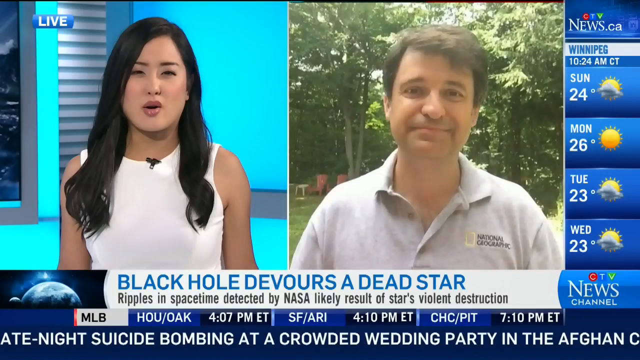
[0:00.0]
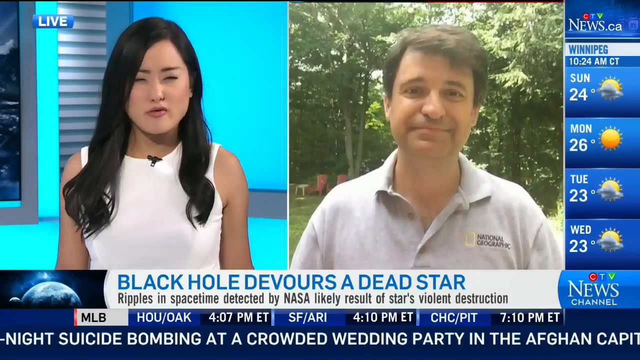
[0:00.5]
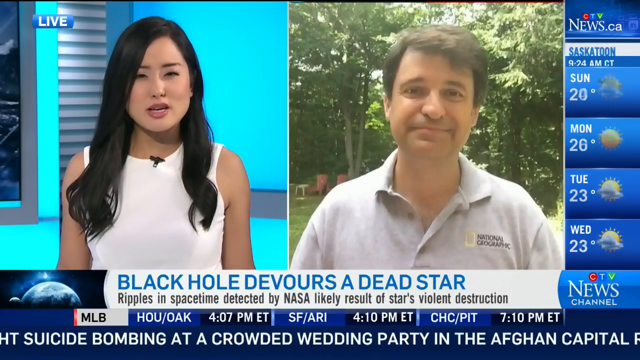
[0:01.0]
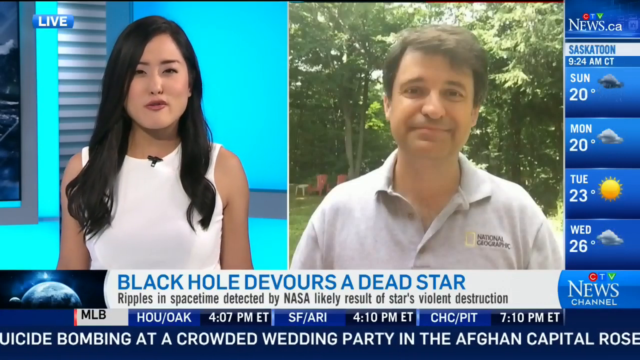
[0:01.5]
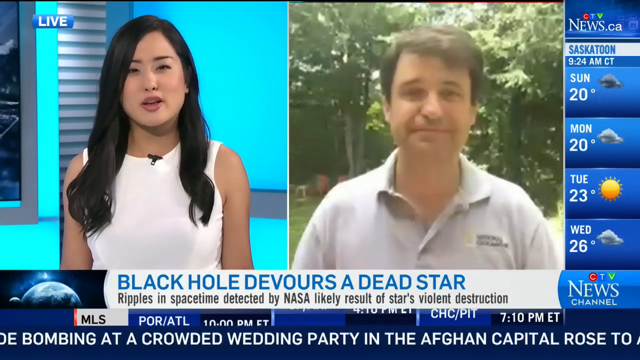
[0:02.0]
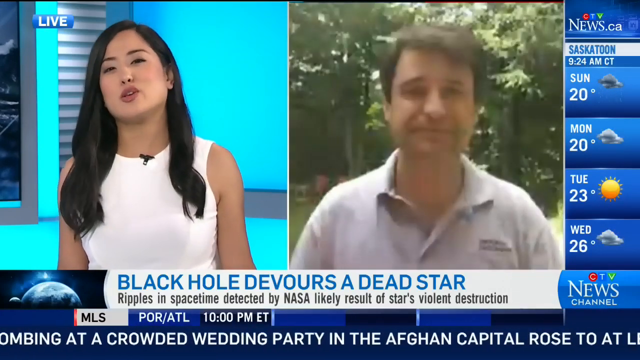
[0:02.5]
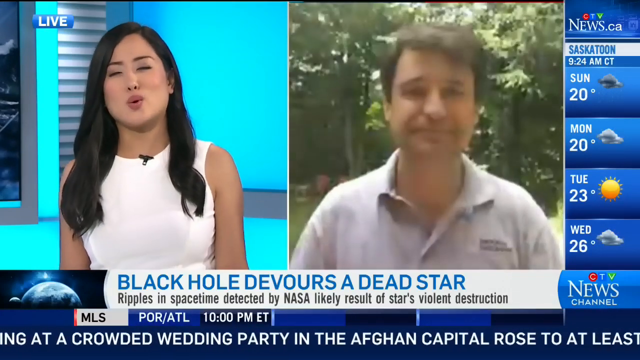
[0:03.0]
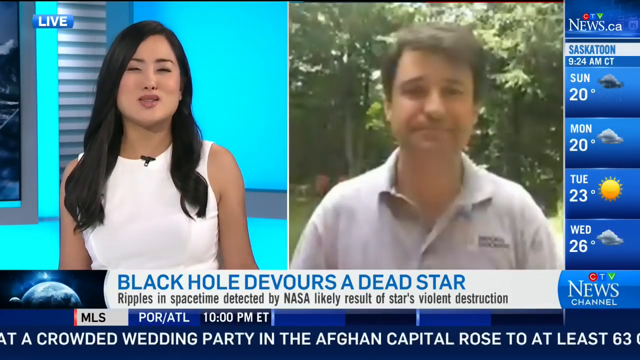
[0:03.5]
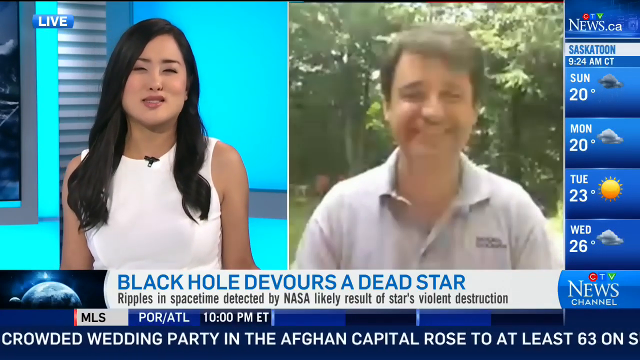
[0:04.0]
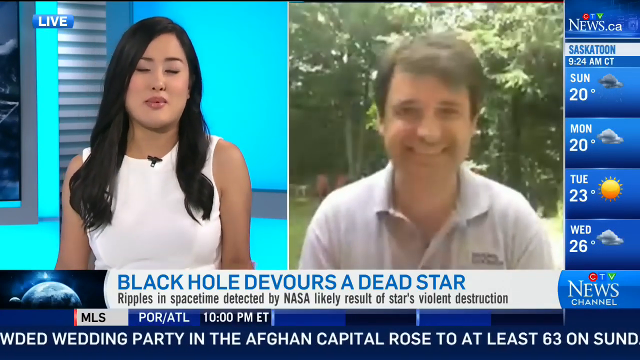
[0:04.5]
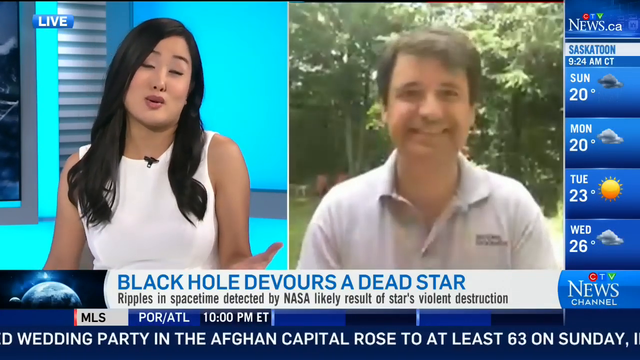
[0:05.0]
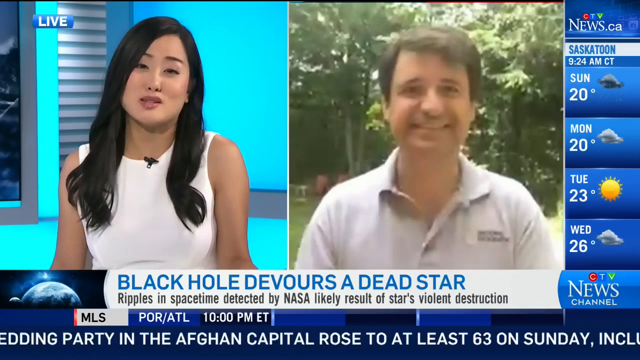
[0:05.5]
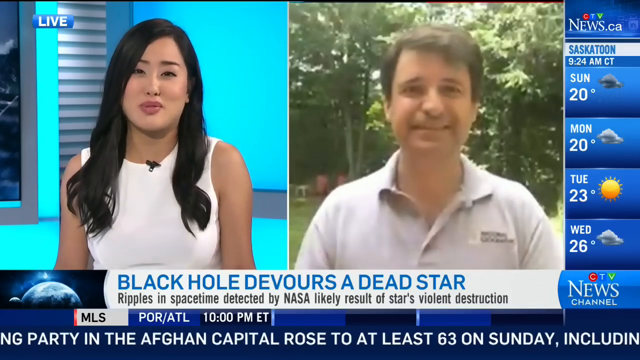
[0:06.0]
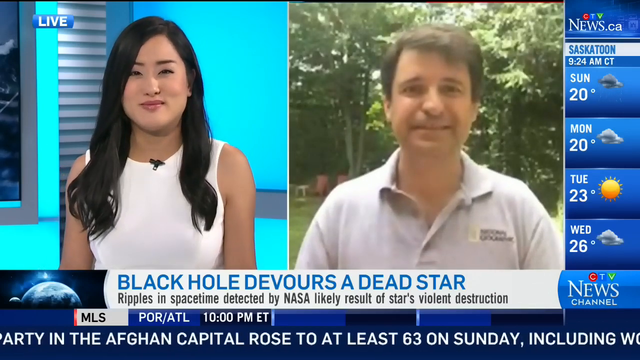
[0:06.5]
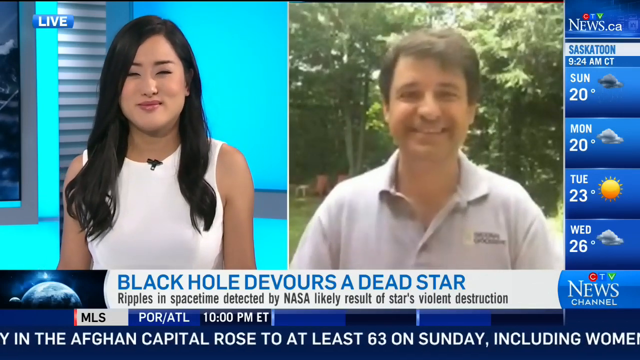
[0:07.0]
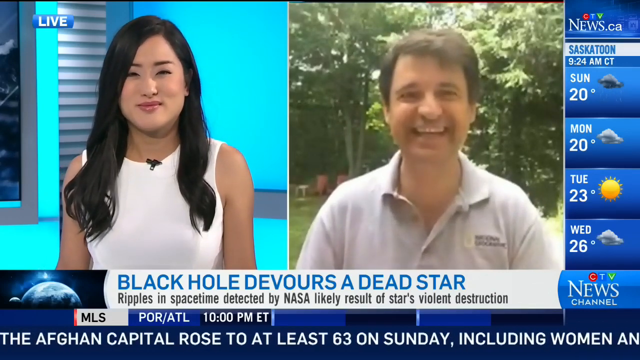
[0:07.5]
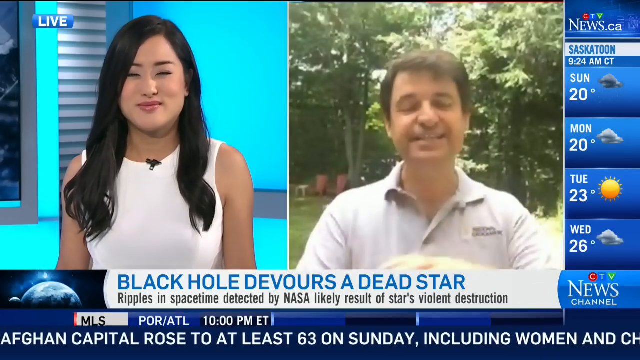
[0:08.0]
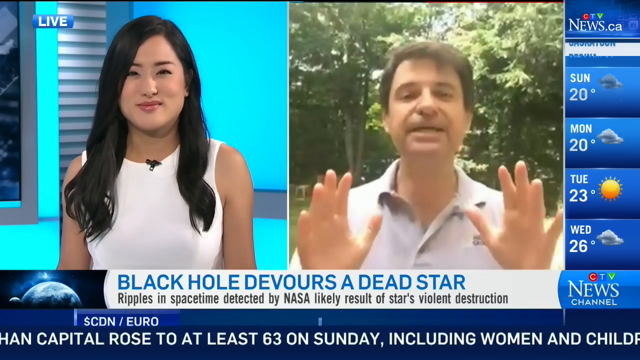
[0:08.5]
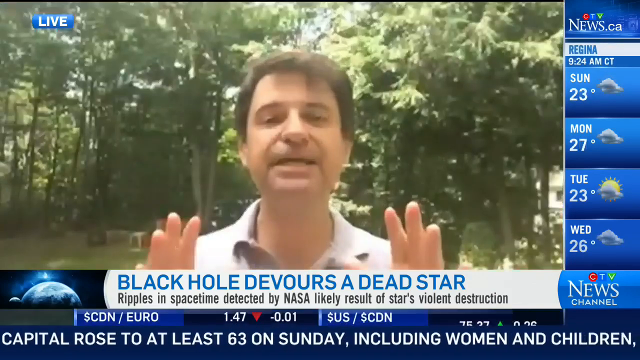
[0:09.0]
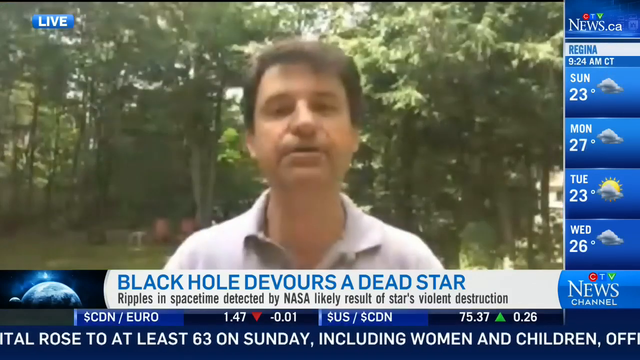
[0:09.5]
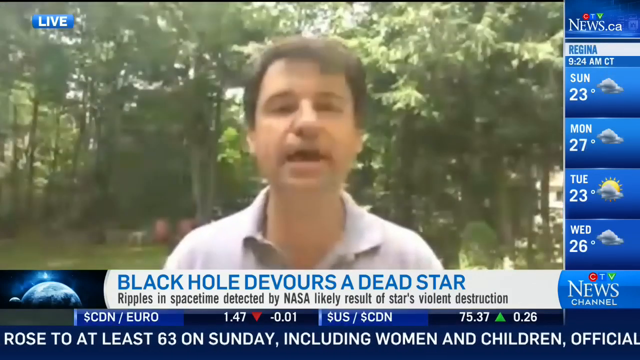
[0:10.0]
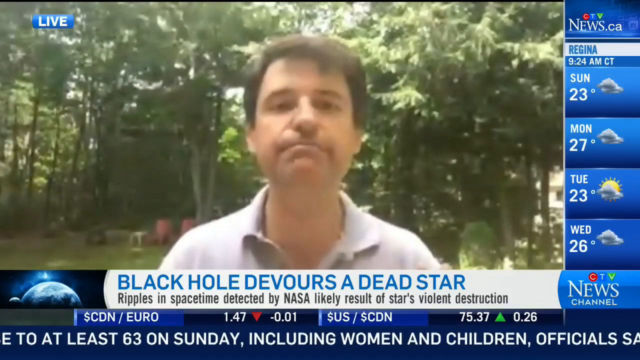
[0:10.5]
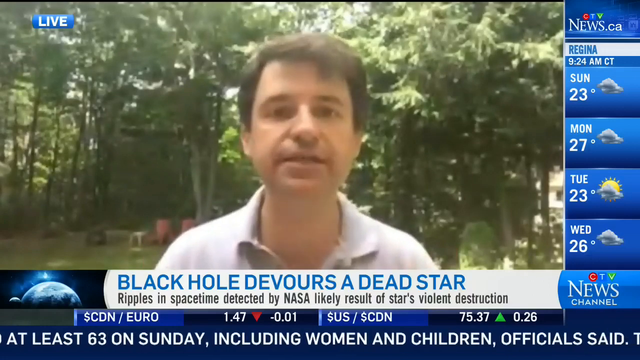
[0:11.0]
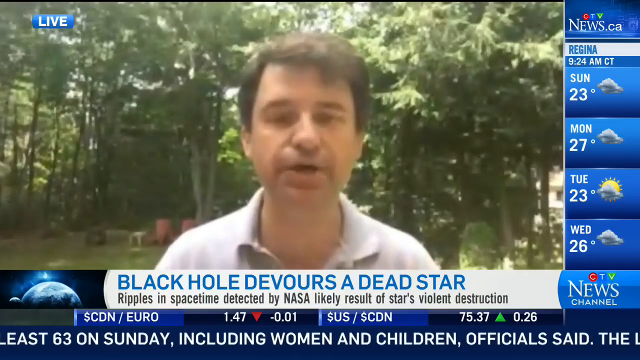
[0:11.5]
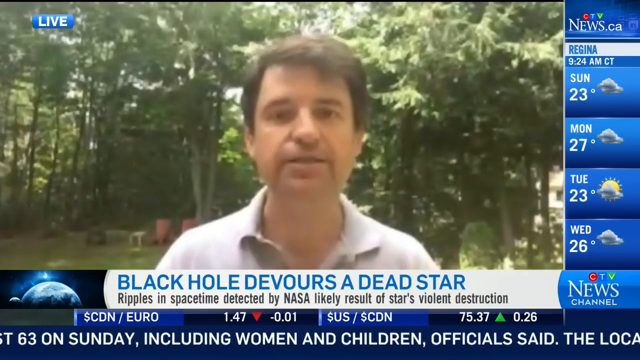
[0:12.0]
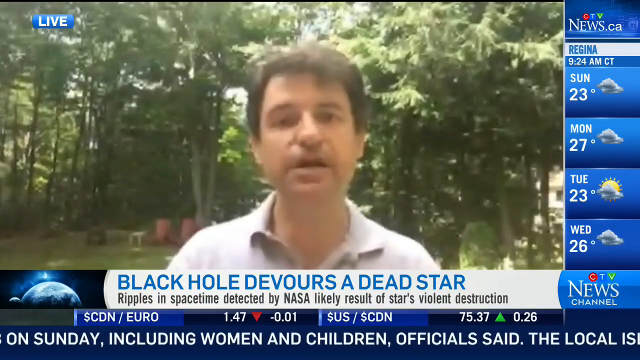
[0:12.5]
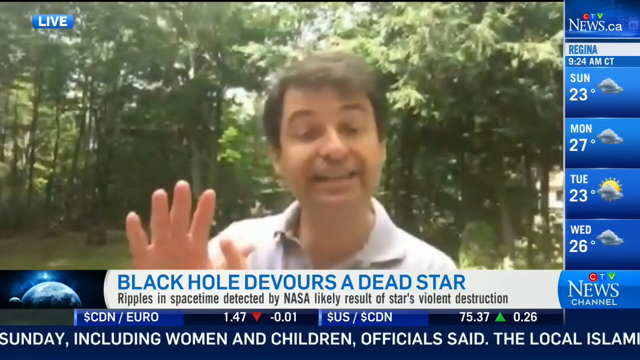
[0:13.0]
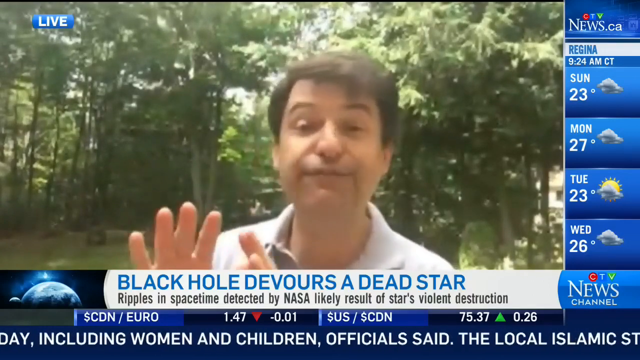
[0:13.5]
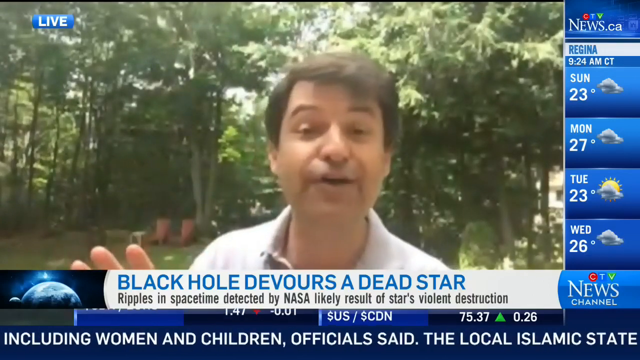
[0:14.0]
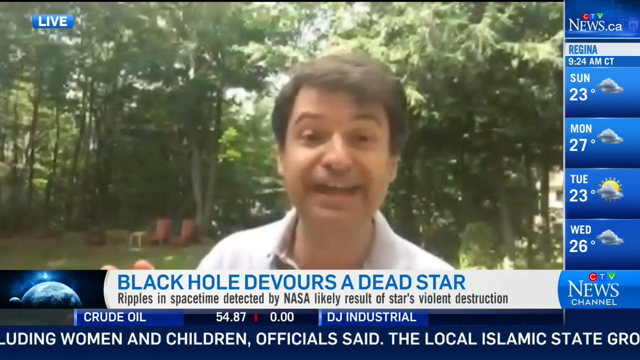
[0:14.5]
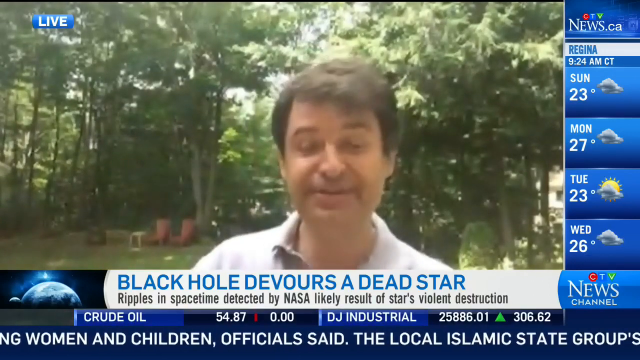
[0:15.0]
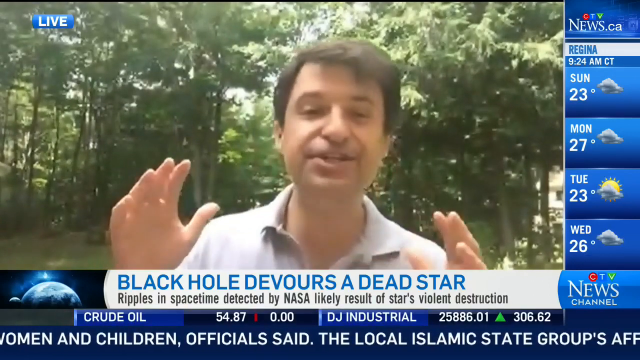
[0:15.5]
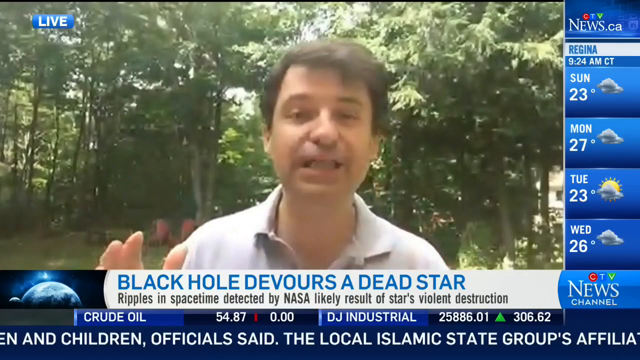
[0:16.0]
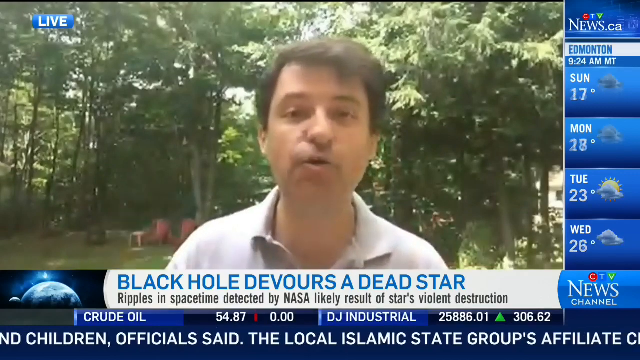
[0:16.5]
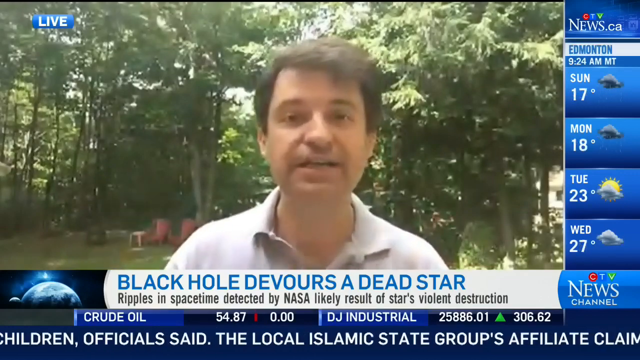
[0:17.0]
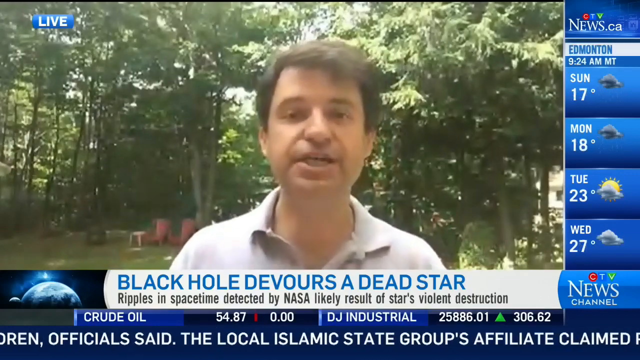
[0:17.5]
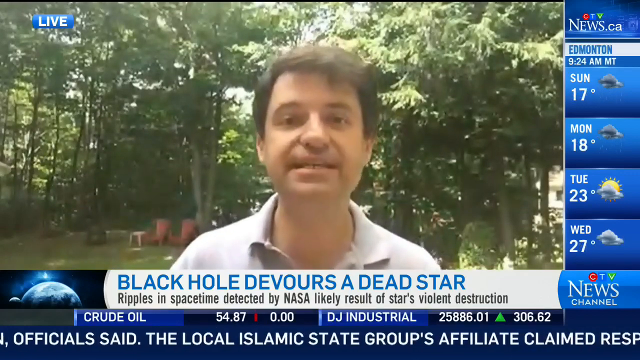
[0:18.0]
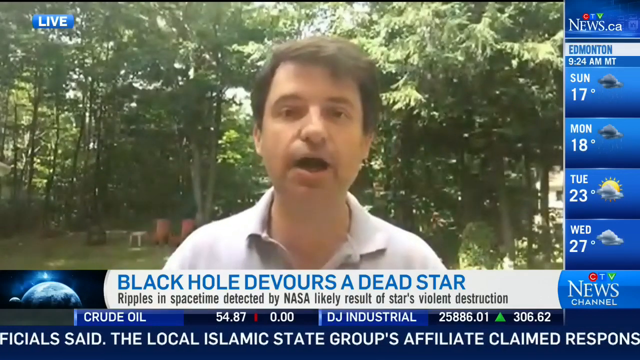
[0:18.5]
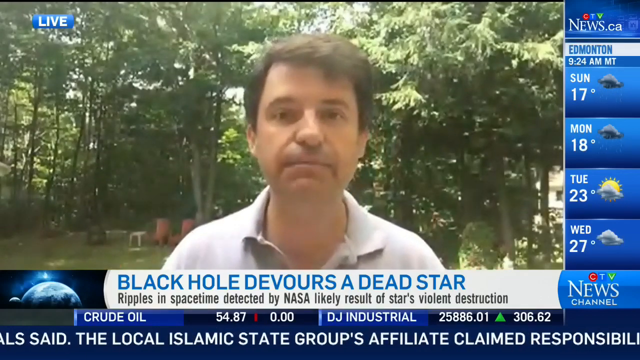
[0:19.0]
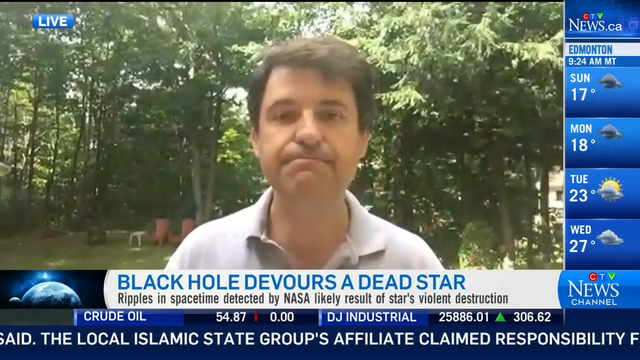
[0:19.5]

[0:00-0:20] A news channel broadcast shows a banner reading "a black hole devours a dead star," along with text saying "ripples in space-time are detected by NASA" and "likely result of star's violent destruction." The news anchor is an Asian-looking woman with long black hair and a white dress, with a microphone on her dress. She is talking with a man wearing a shirt that says "national geographic"; he has short brown hair and seems to be a Caucasian man of maybe 40 to 50. A ticker at the bottom of the screen shows other news about a crowded wedding party in the Afghan capital, with text saying the toll "rose to at least 63 on Sunday including women and children" and that "the local Islamic State group affiliate claimed responsibility."